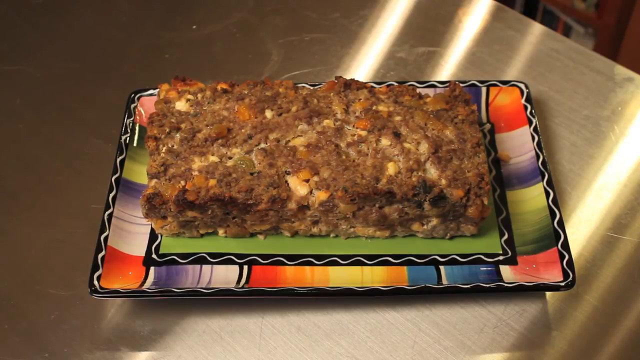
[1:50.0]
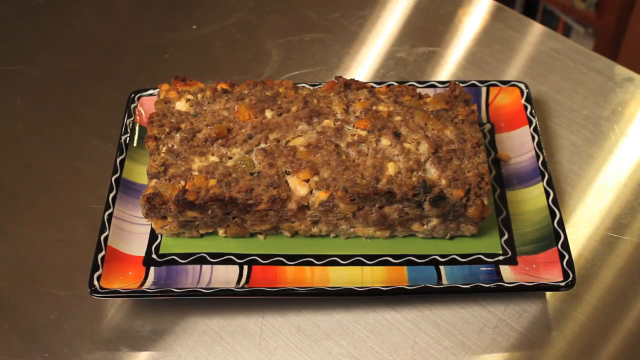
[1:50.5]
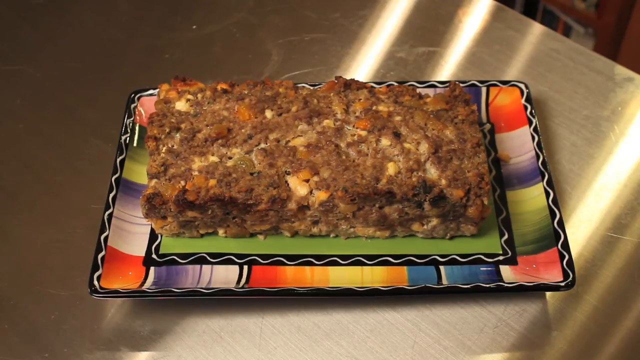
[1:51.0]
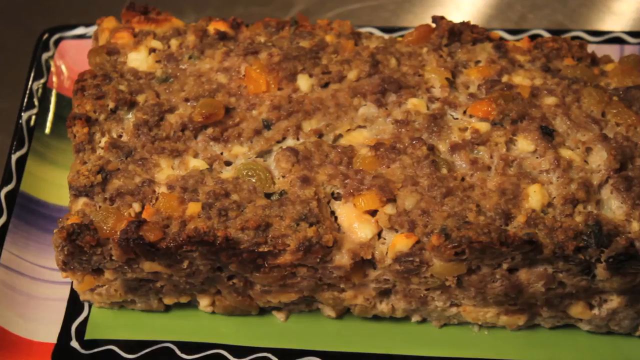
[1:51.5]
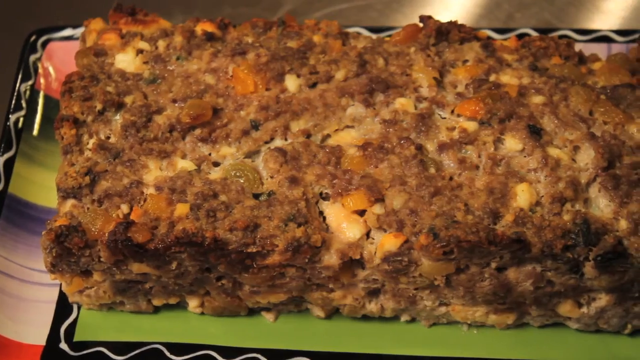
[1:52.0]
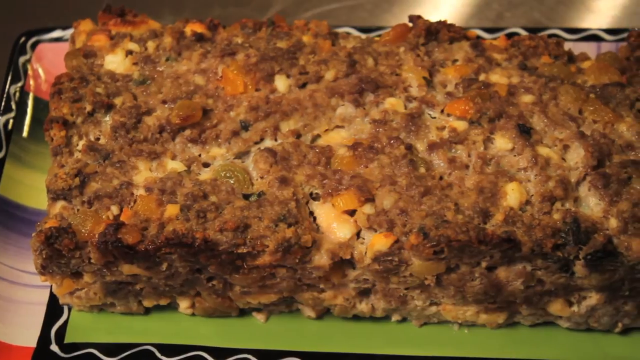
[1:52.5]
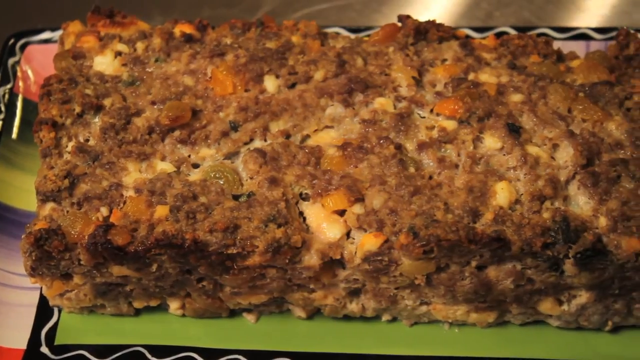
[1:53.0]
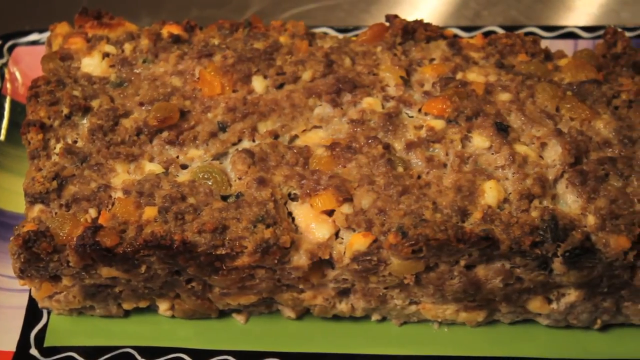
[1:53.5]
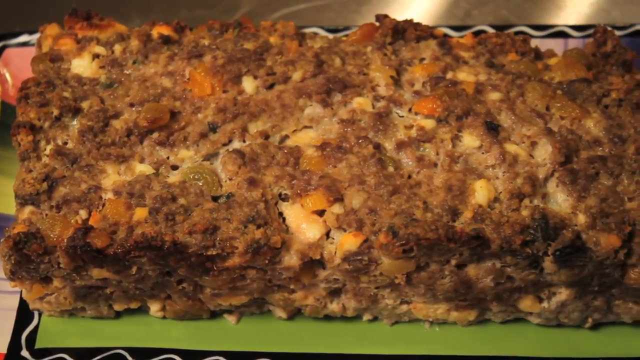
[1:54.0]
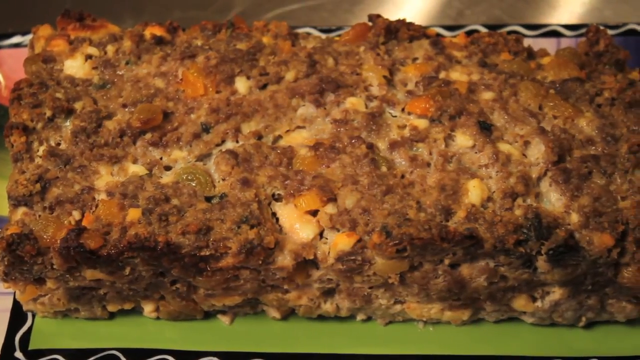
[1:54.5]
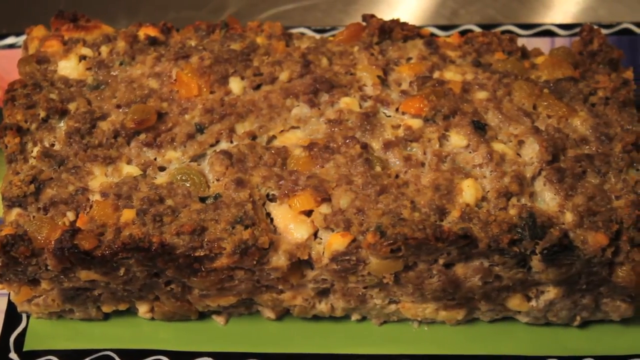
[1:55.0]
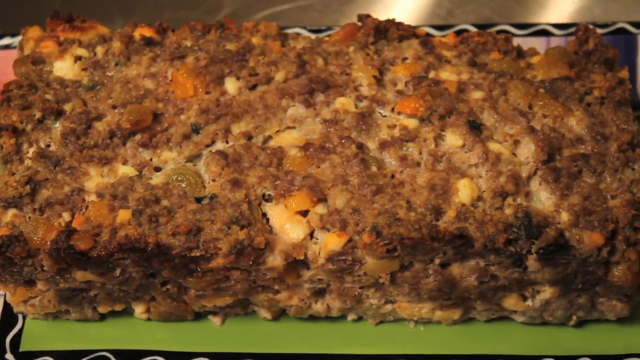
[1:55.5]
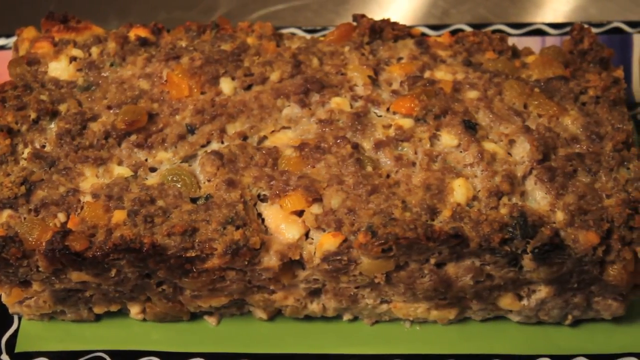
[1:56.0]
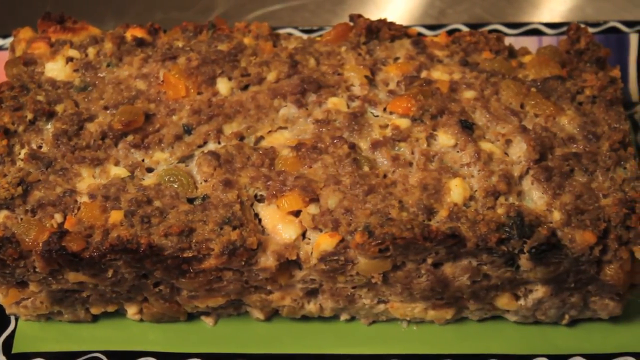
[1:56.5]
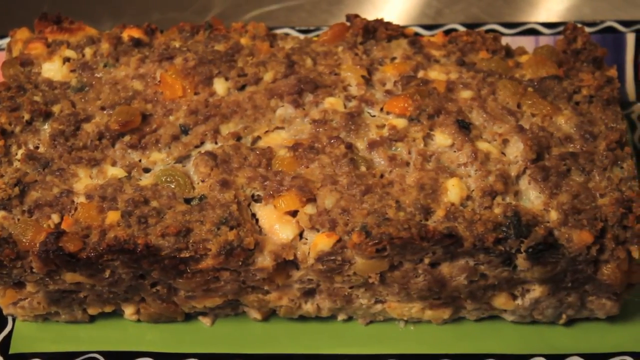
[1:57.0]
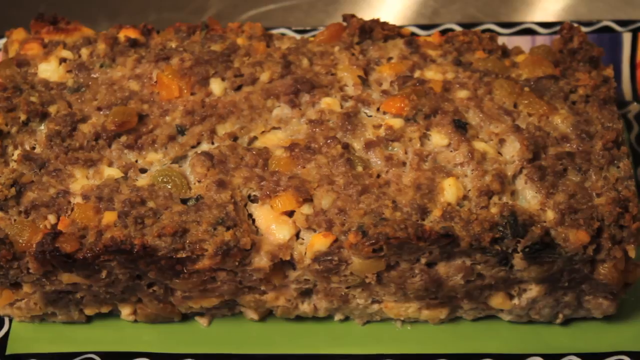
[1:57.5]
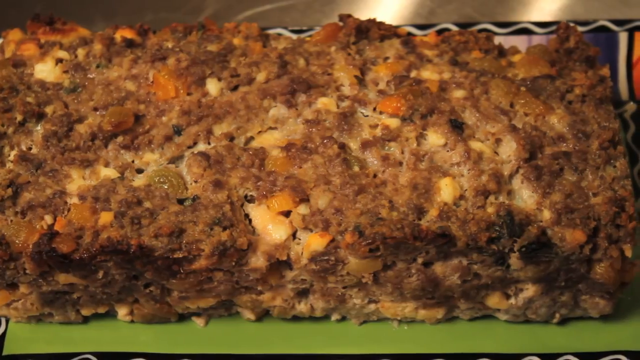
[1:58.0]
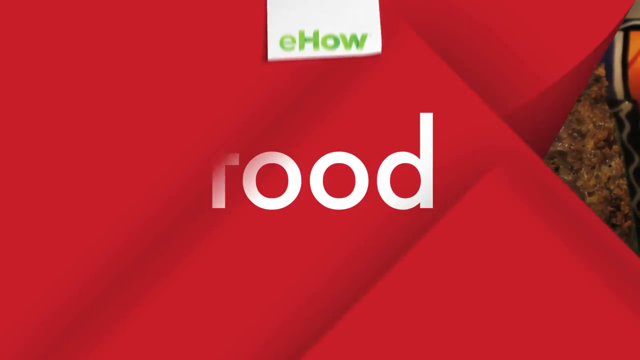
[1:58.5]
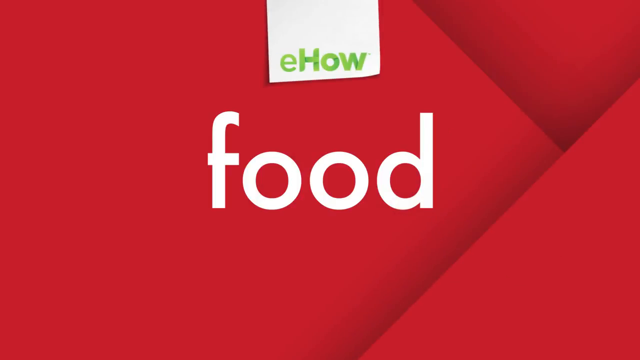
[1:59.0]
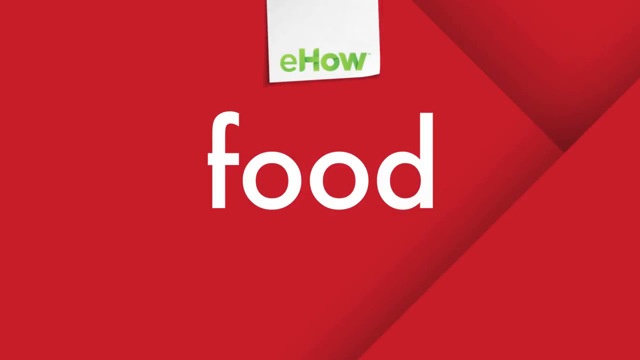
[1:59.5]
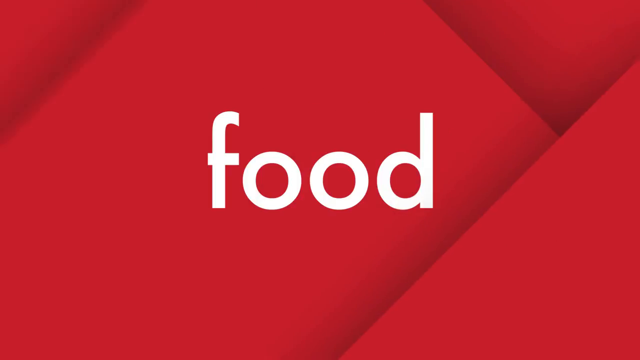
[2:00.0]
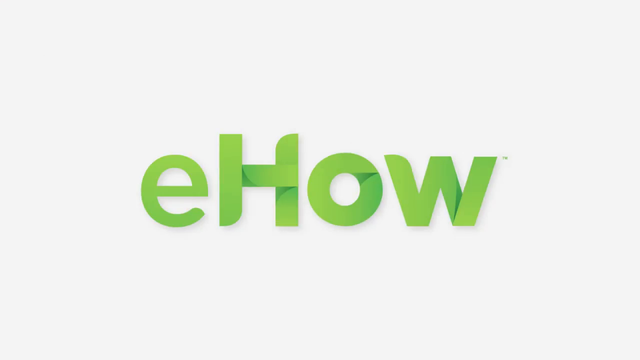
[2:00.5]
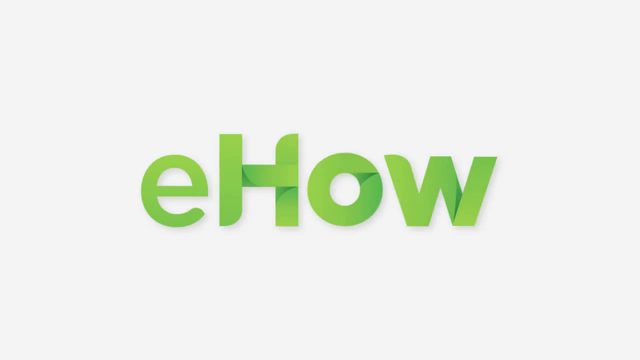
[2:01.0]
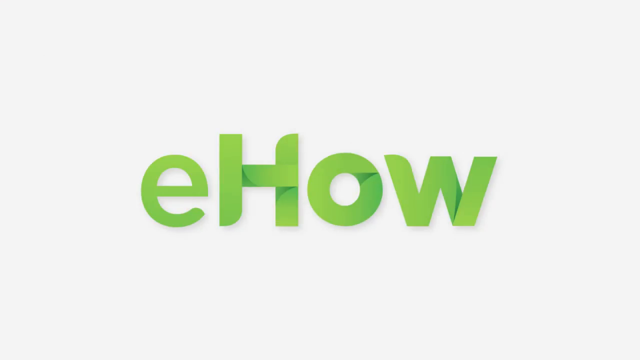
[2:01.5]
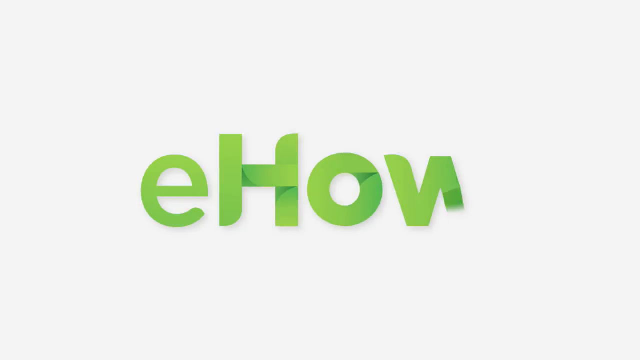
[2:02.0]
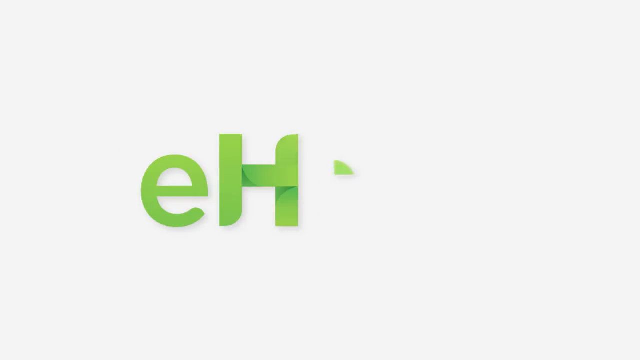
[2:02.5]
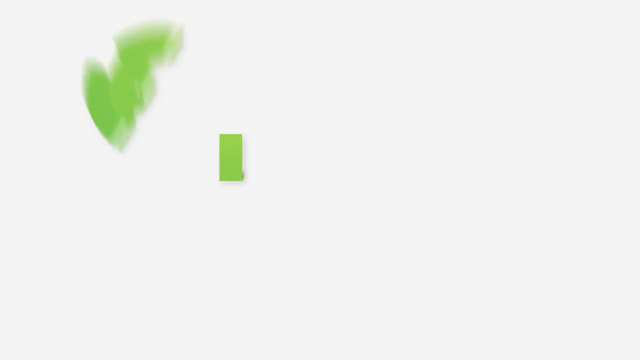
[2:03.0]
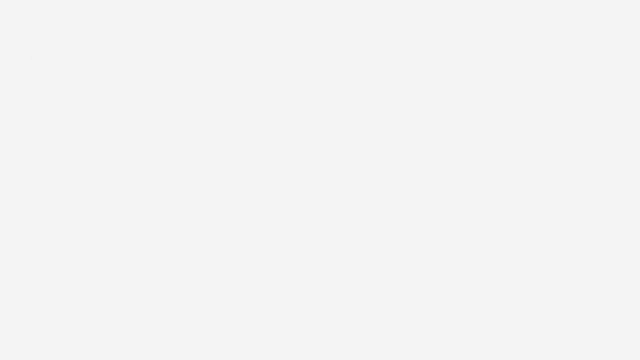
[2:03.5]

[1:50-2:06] The finished ground meat mixture, out of the oven, is sitting in the middle of a very colorful presentation plate on the stainless steel table. The plate has a black border with white squiggles inside and many colors in the center: red, white, purple, green, pink, blue, yellow and orange. The meatloaf looks very dry and crumbly and a little burnt on the edges. A close-up of the meatloaf kind of pans from left to right with the eHow logo and the food logo.